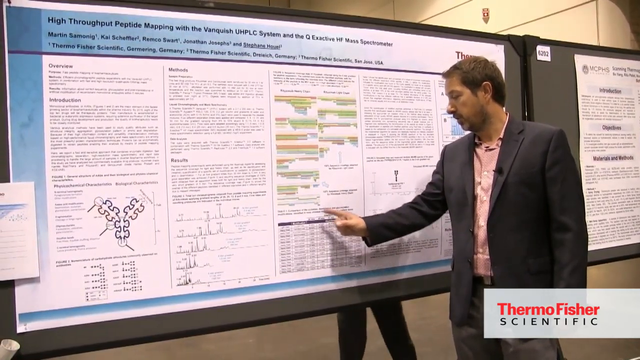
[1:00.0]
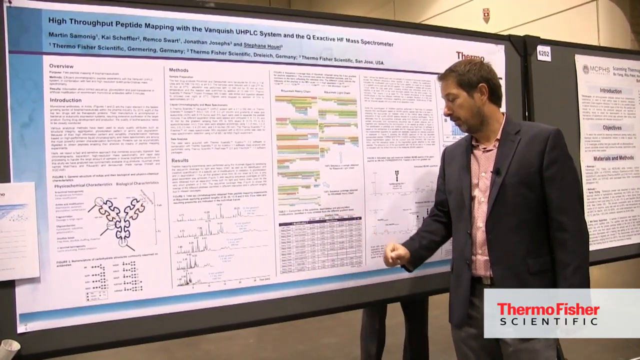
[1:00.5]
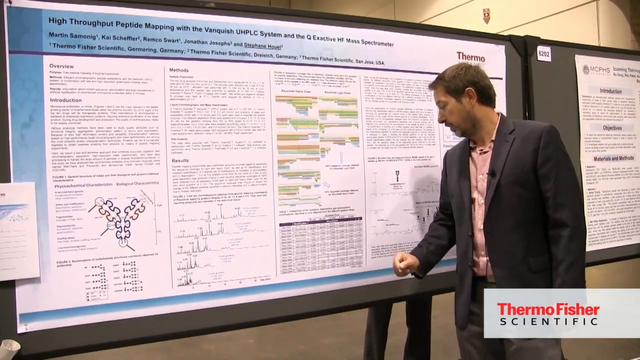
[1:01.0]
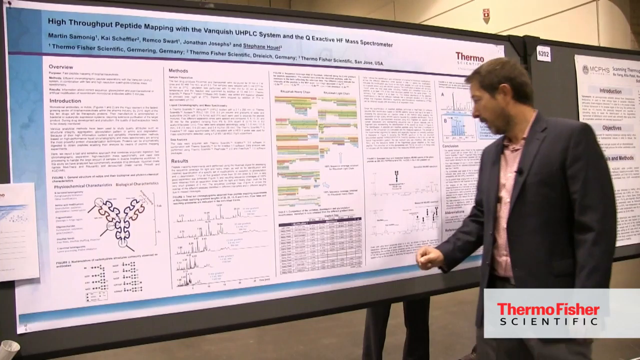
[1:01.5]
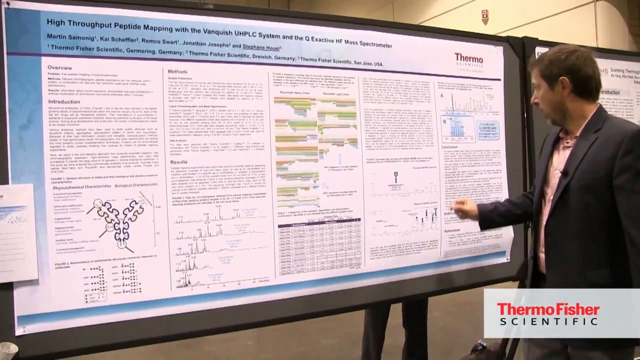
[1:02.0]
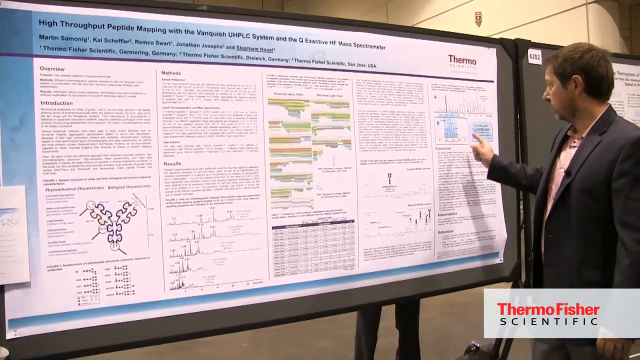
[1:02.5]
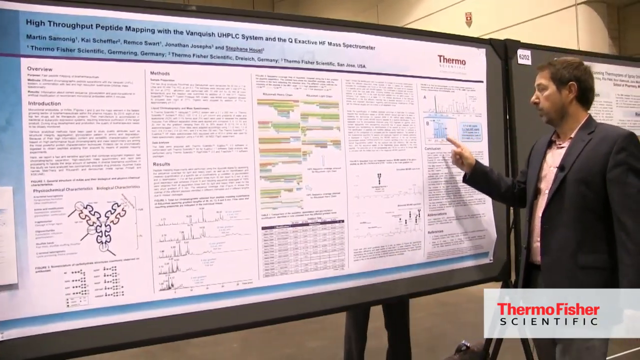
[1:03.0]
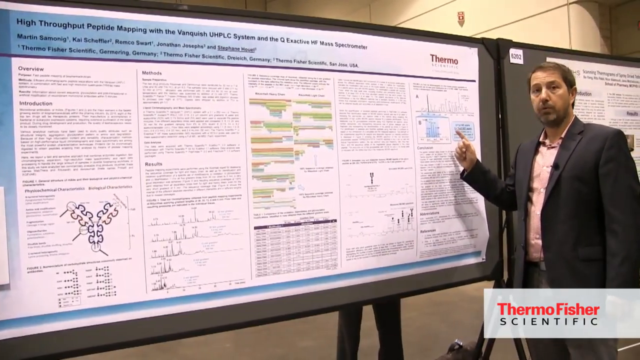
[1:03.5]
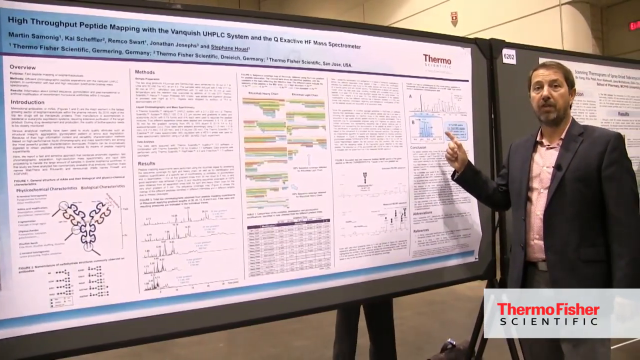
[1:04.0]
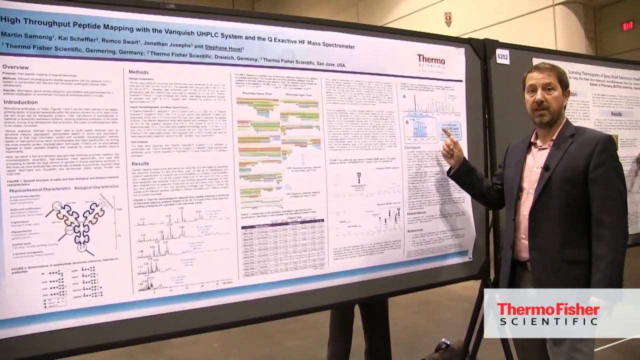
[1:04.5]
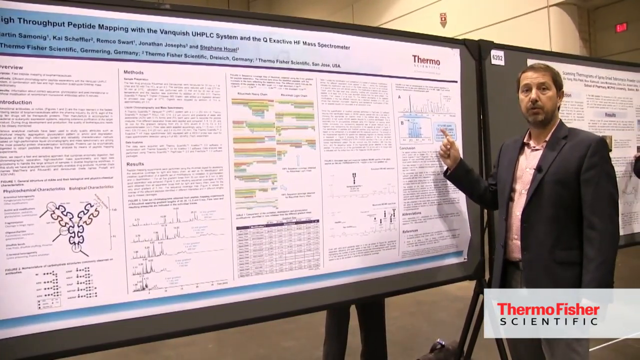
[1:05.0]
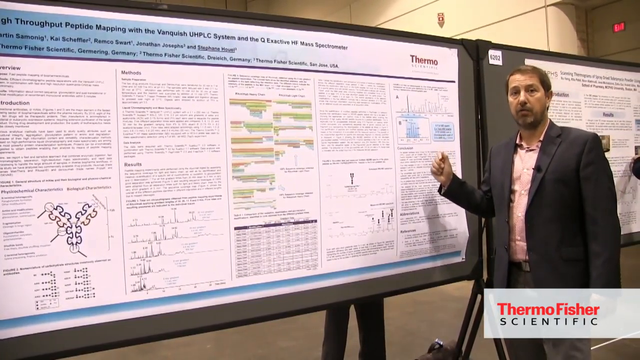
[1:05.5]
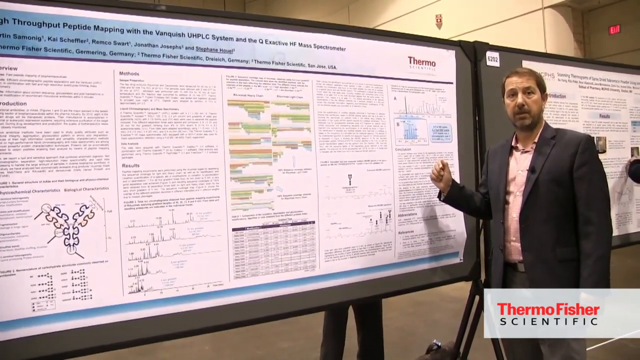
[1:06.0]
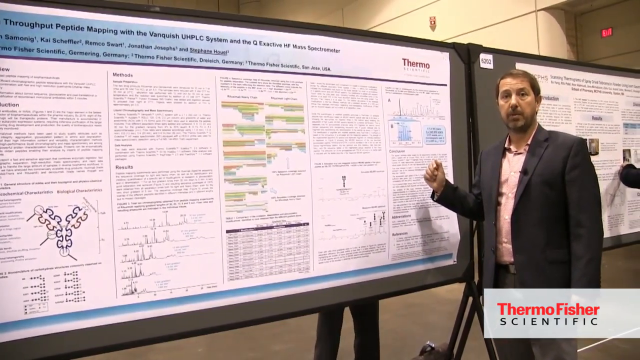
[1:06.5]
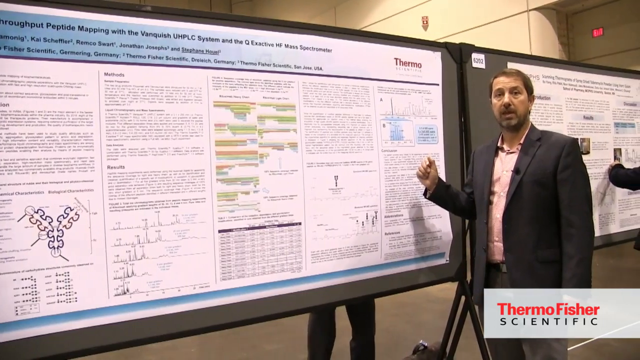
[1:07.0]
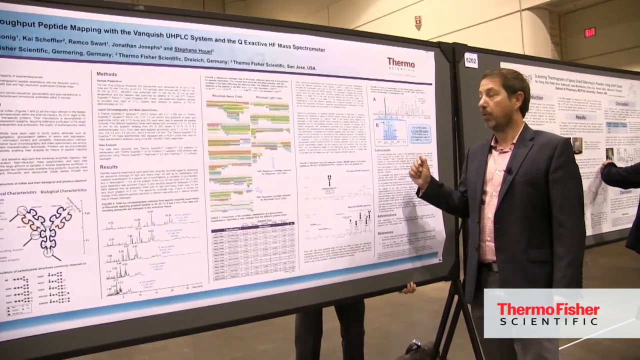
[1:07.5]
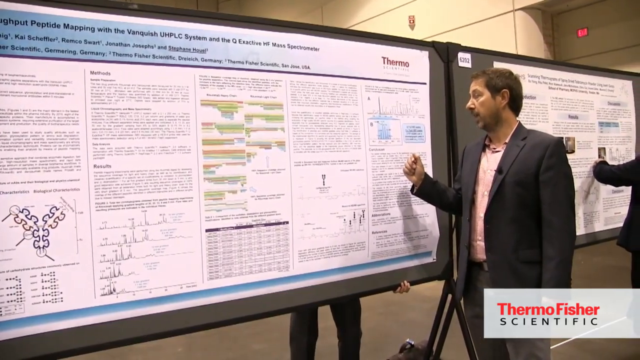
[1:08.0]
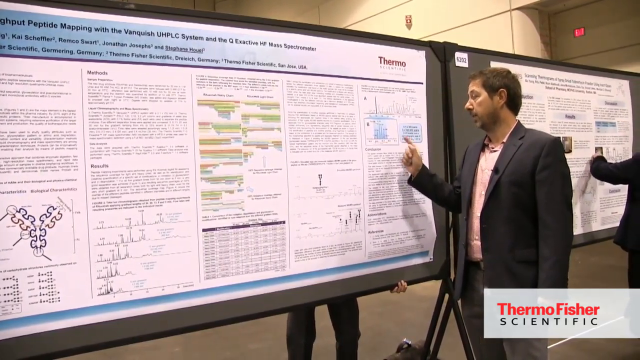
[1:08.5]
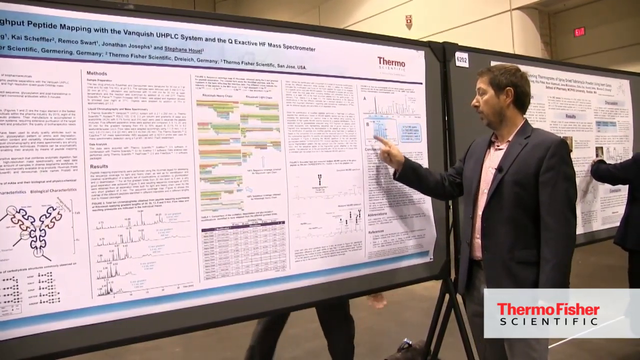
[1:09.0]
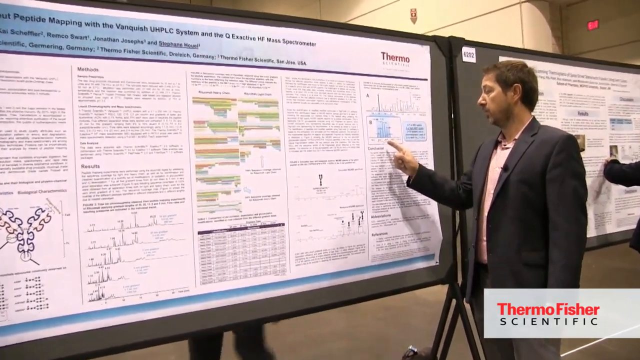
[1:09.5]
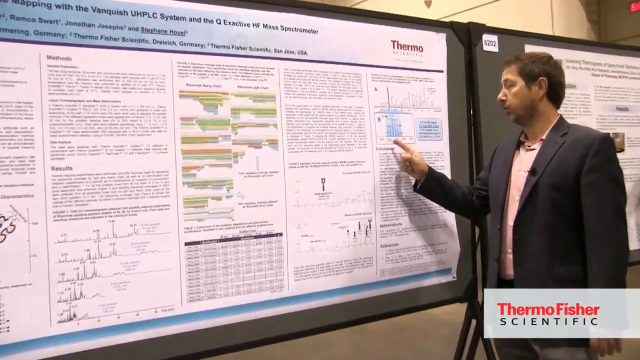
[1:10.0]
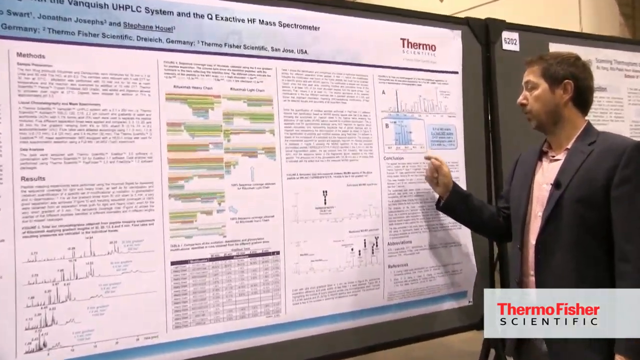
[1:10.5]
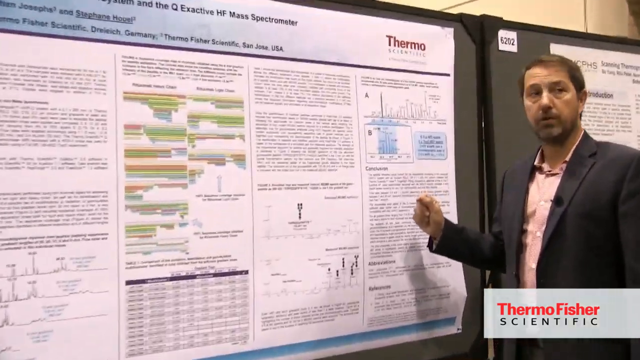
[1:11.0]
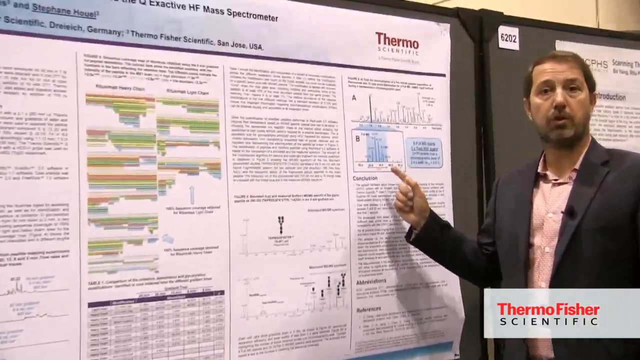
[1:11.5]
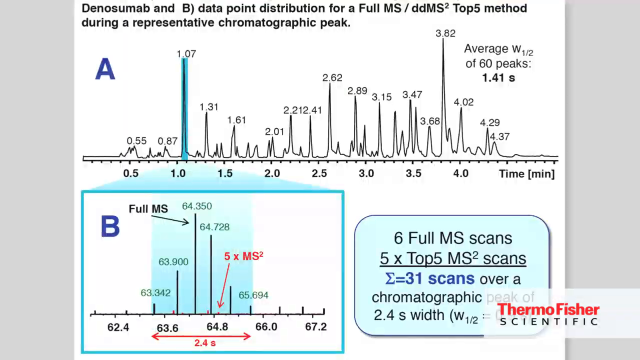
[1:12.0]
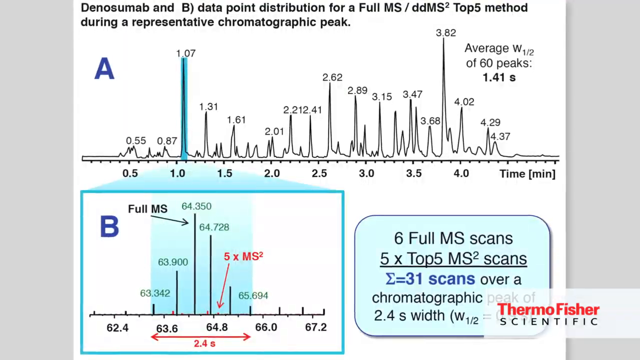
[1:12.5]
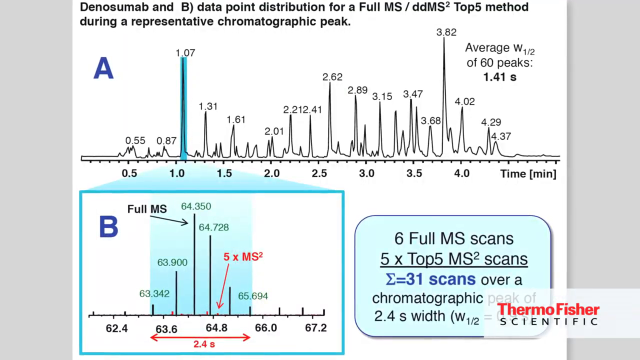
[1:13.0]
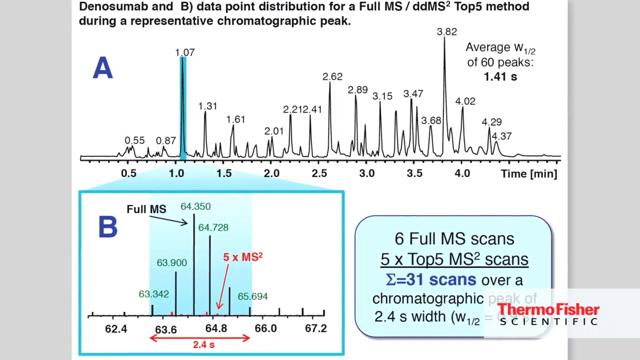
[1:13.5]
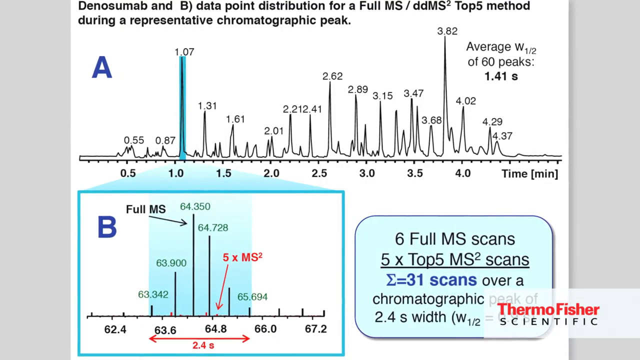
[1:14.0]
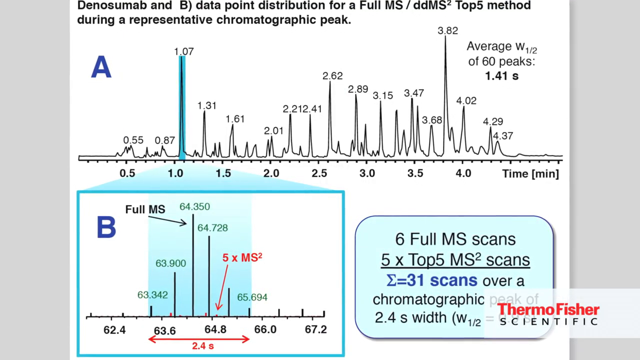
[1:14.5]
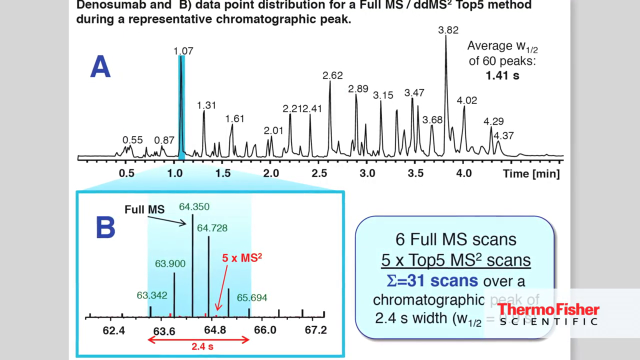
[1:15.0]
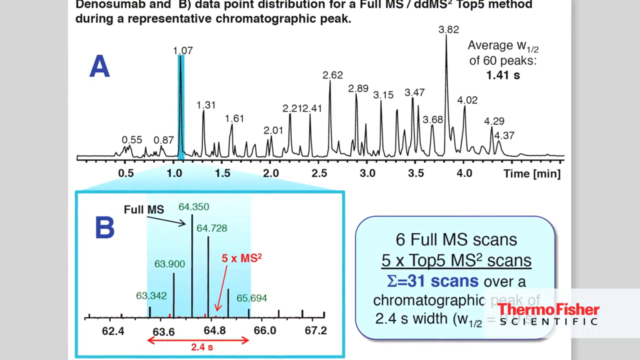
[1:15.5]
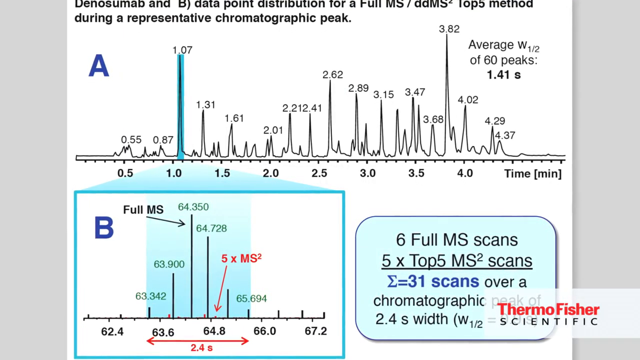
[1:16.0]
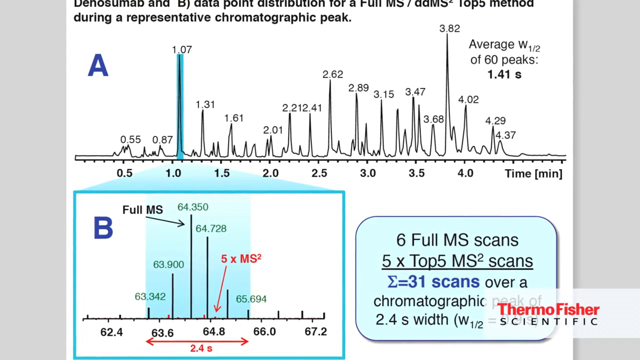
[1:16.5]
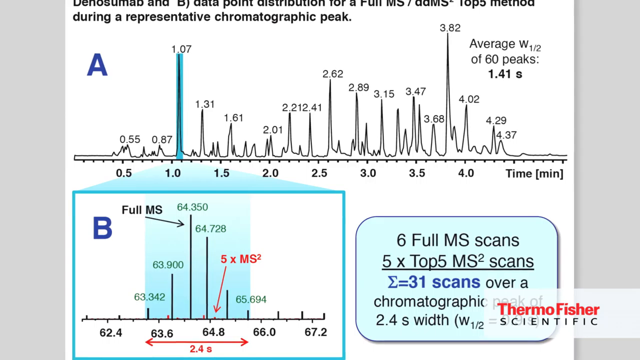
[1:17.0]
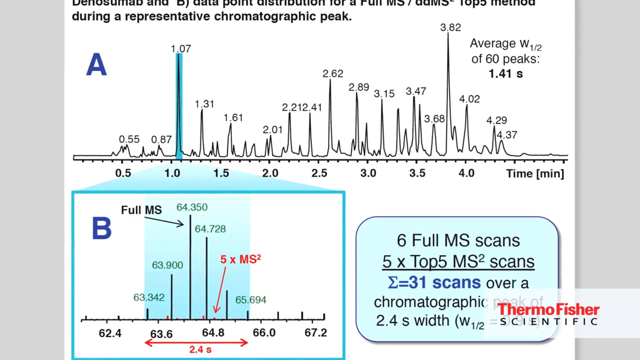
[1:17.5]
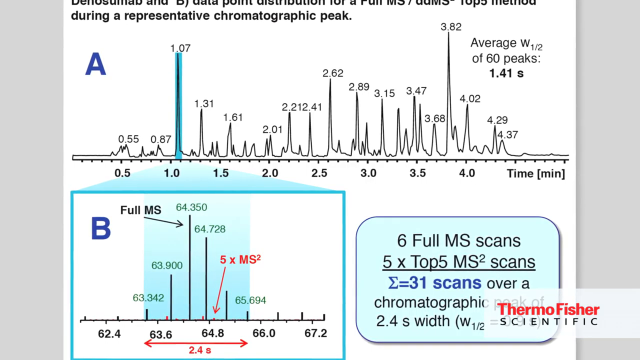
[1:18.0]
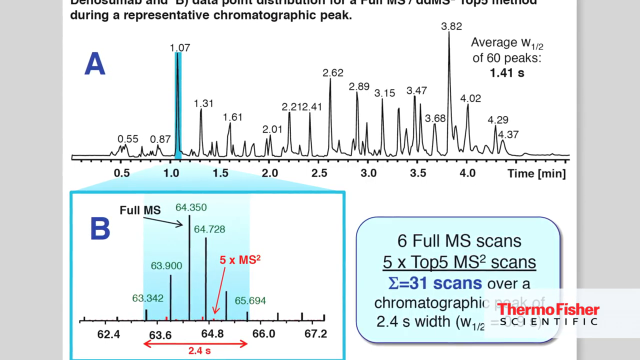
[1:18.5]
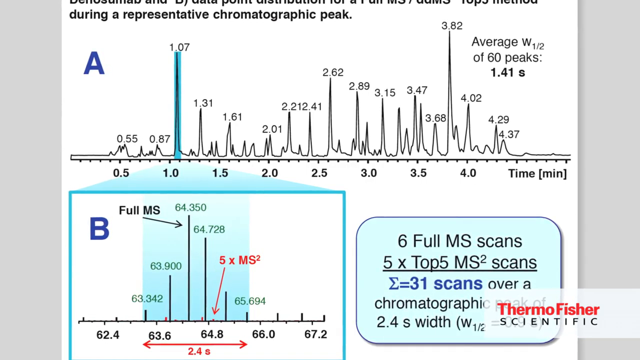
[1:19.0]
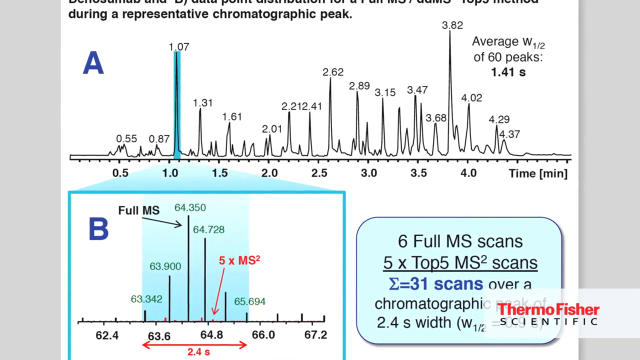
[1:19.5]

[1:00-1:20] Different formulas and calculation methods are shown. A chart shows the differences from A to B as they were graphed, how they changed over time, and the time period that was charted.